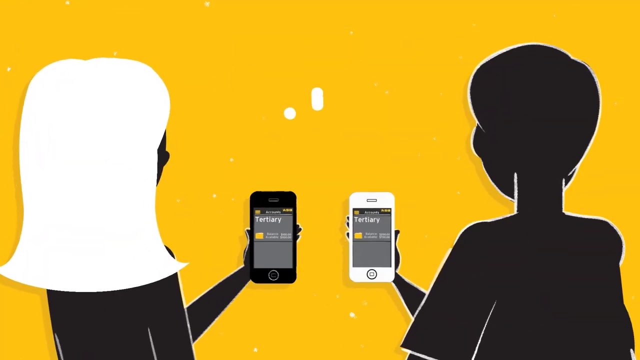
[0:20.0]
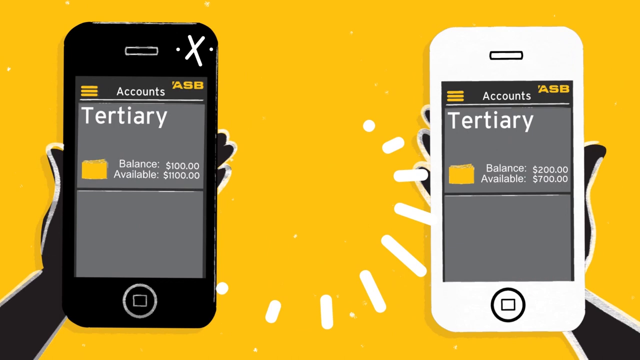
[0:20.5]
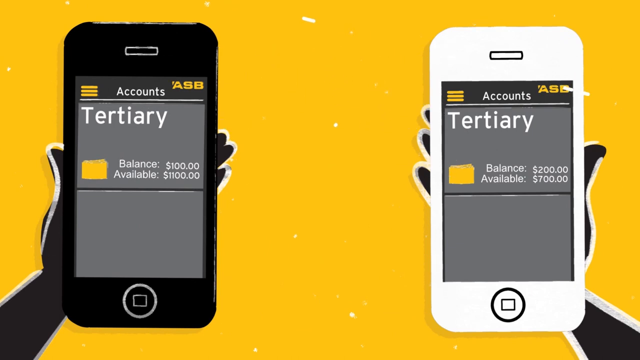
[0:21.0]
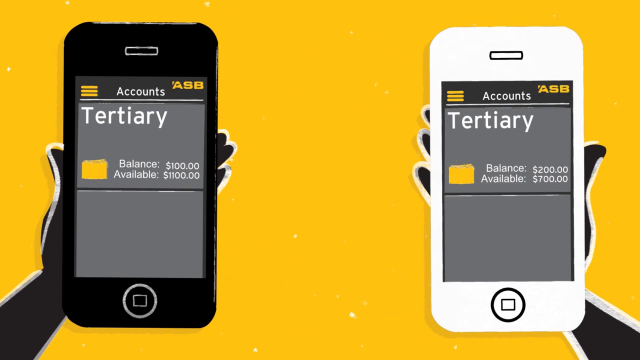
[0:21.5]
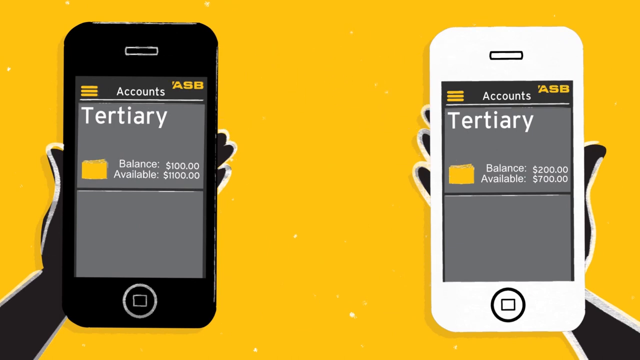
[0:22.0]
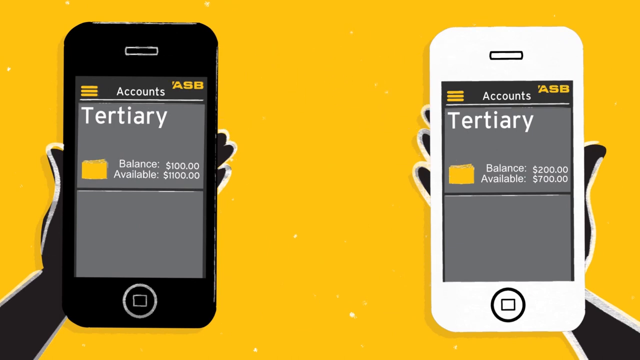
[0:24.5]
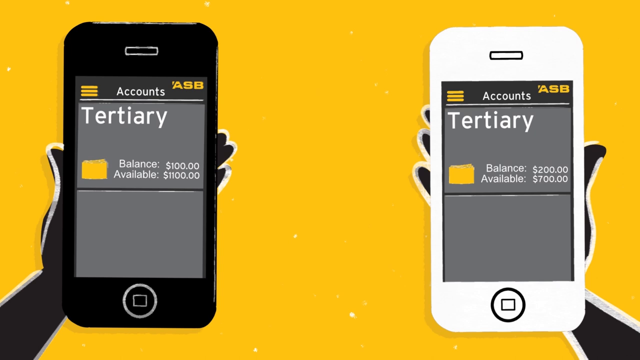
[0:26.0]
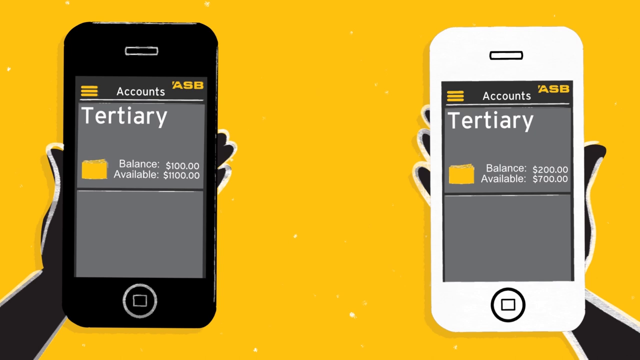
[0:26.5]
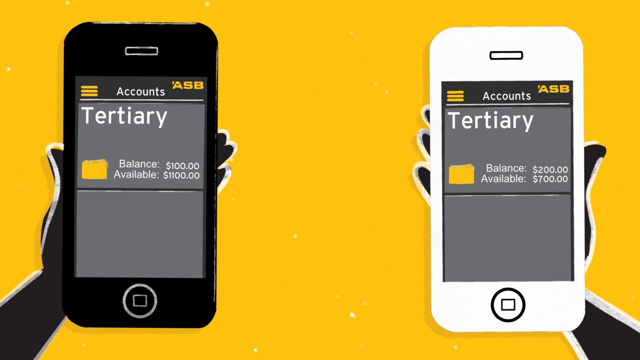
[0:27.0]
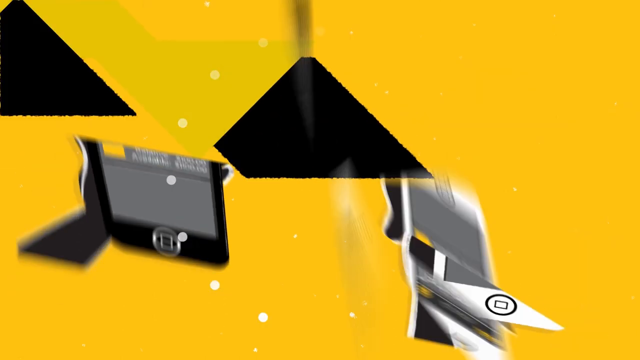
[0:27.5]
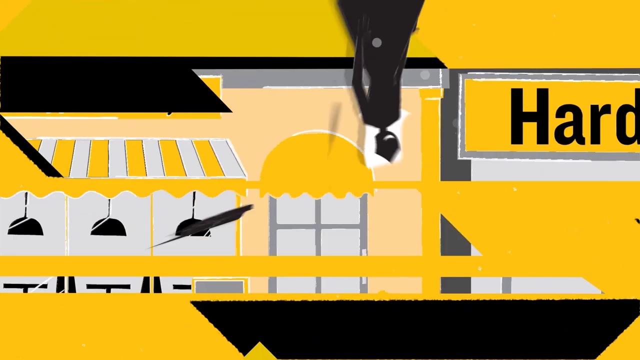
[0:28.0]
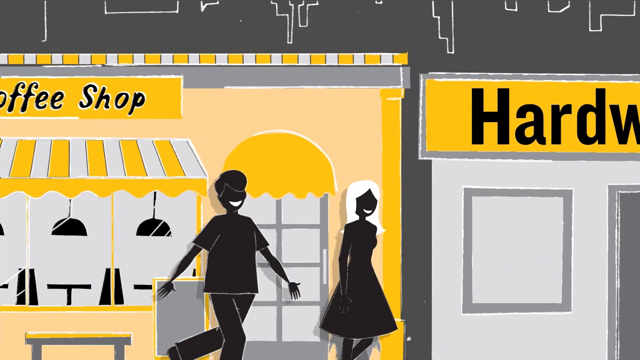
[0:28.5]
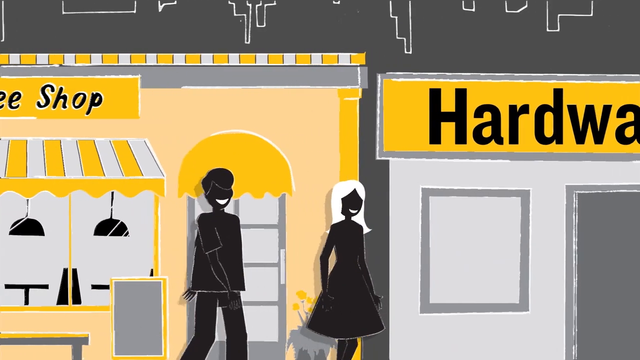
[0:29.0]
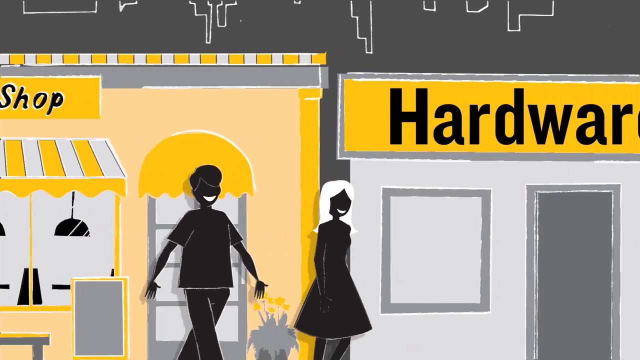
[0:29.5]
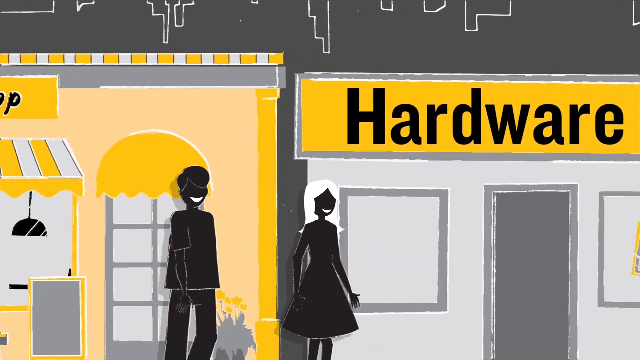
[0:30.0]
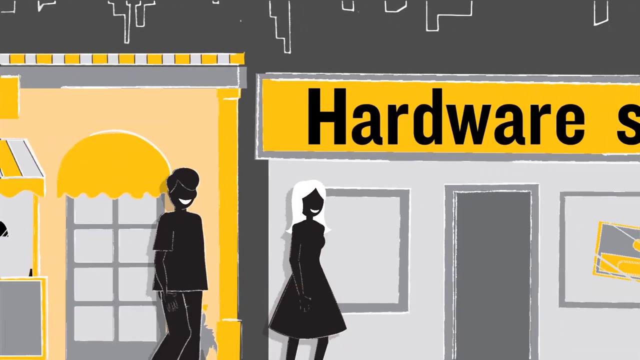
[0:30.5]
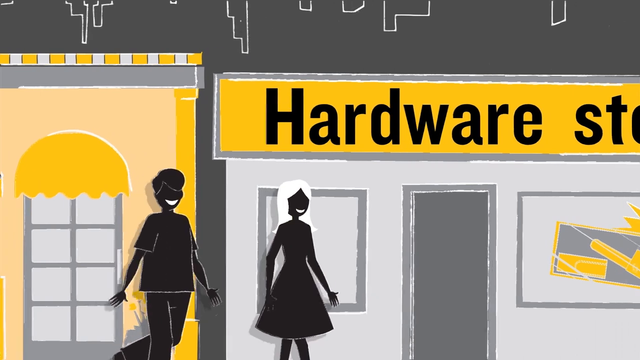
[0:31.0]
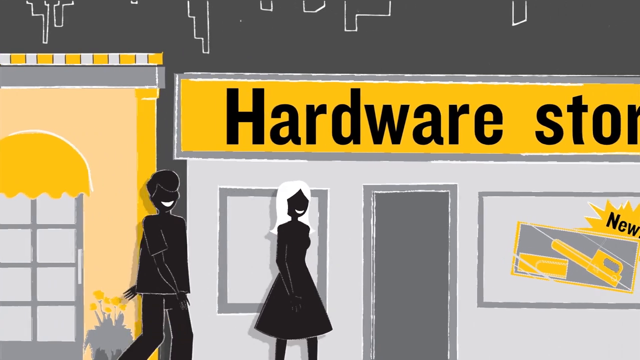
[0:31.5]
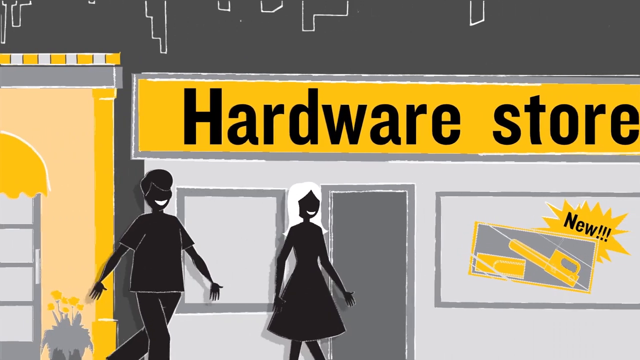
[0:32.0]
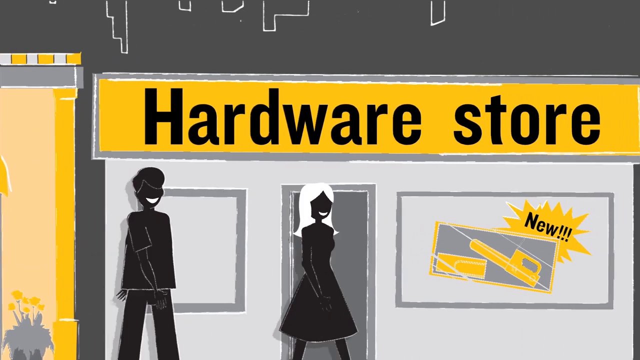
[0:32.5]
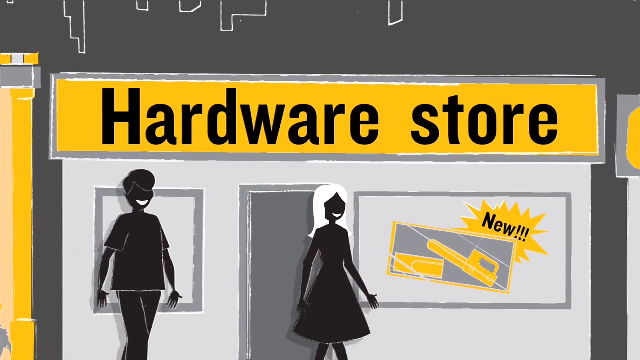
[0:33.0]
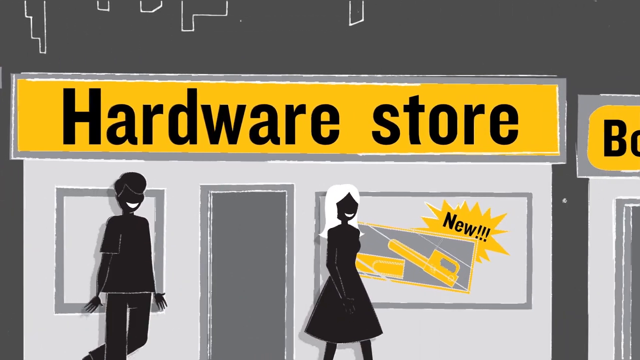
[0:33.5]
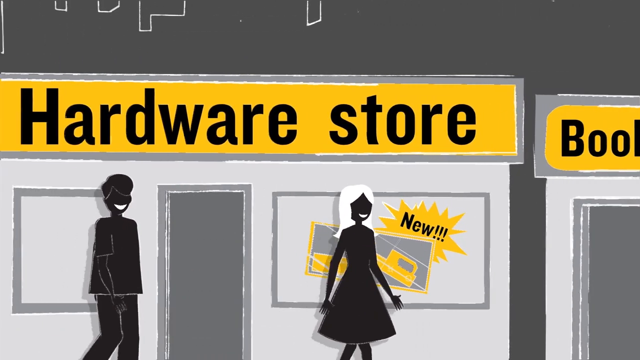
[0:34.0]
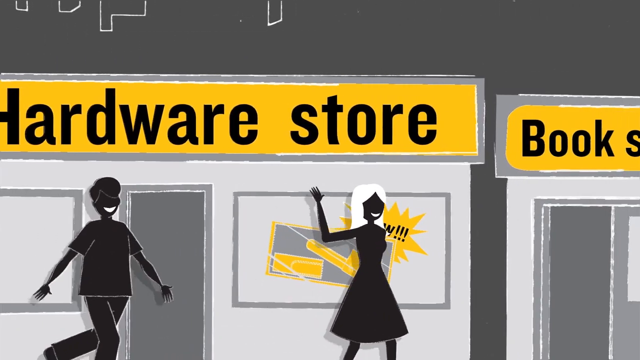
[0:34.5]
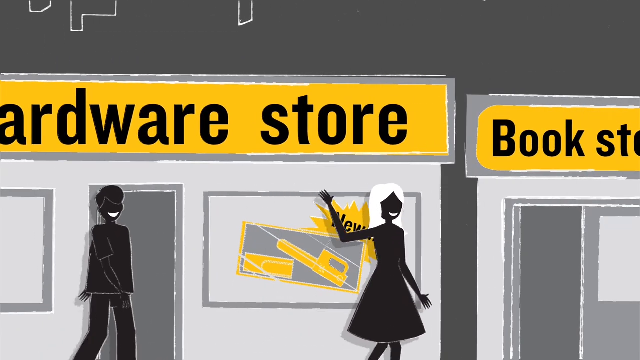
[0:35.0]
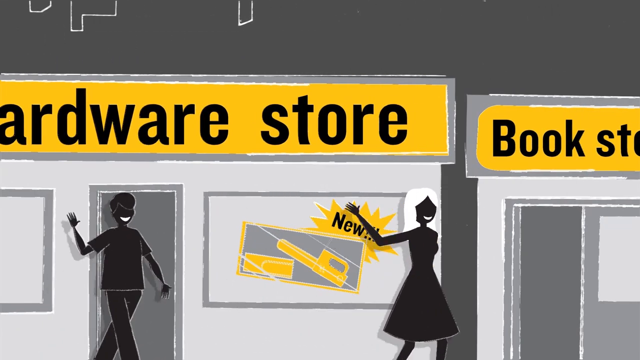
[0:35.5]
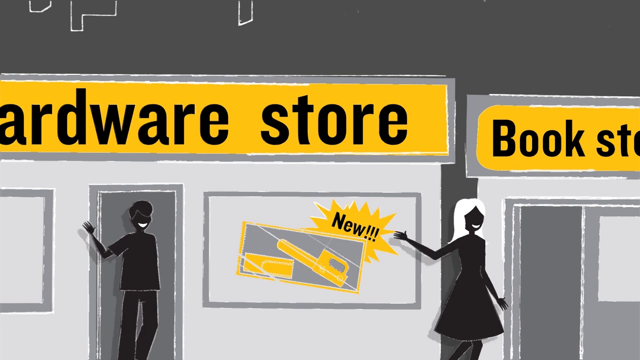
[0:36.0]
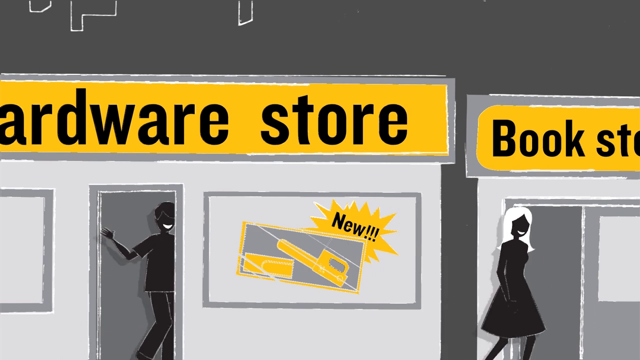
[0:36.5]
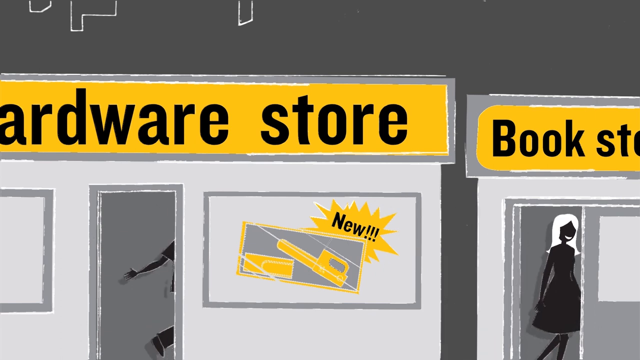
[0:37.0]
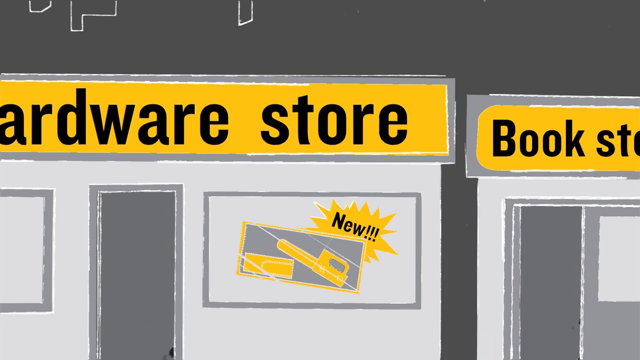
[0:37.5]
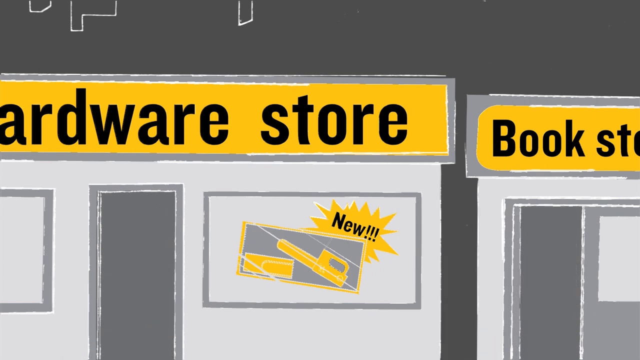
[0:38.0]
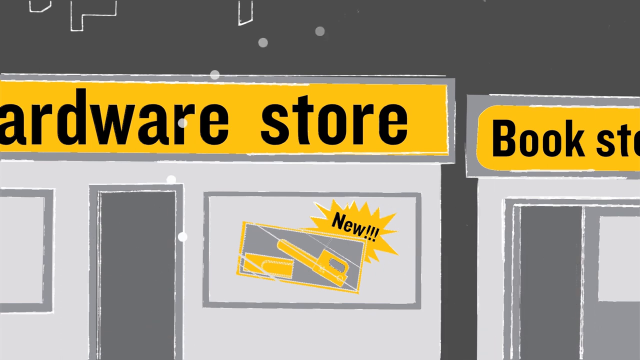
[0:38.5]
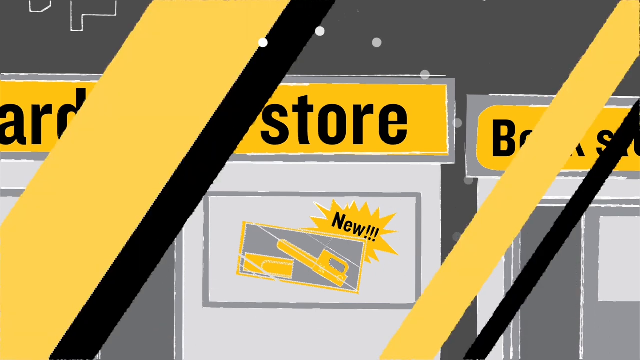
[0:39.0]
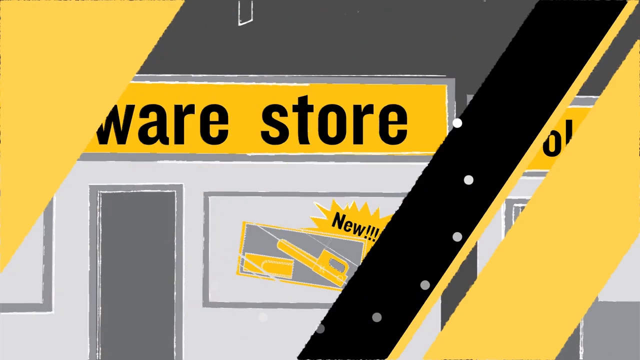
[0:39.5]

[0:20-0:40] A sample account display shows an available balance of a hundred thousand and a current balance of a hundred and ten thousand.